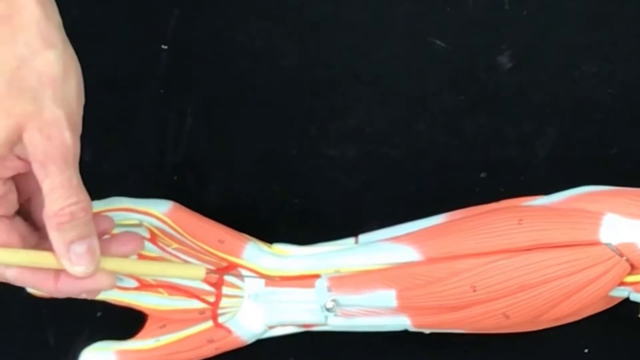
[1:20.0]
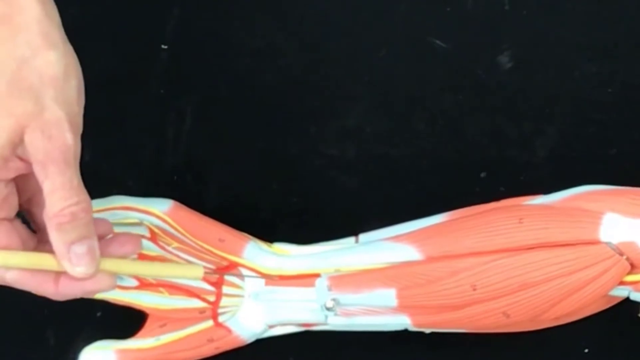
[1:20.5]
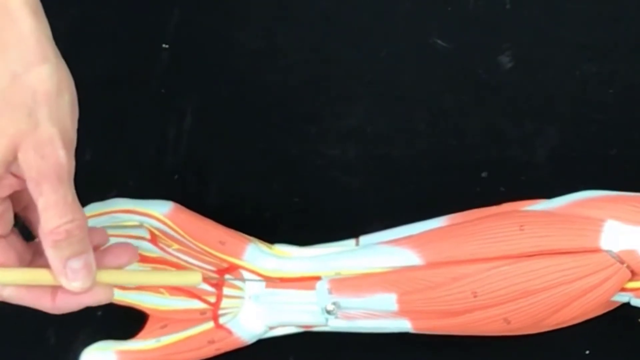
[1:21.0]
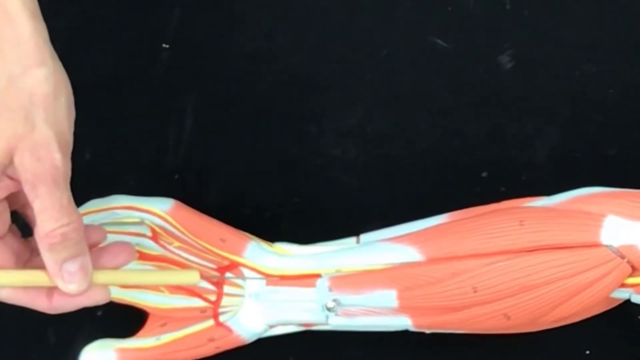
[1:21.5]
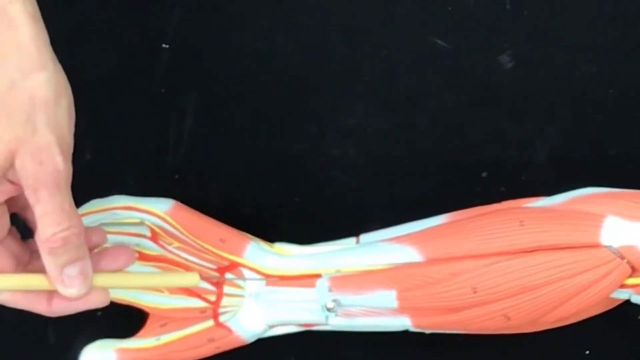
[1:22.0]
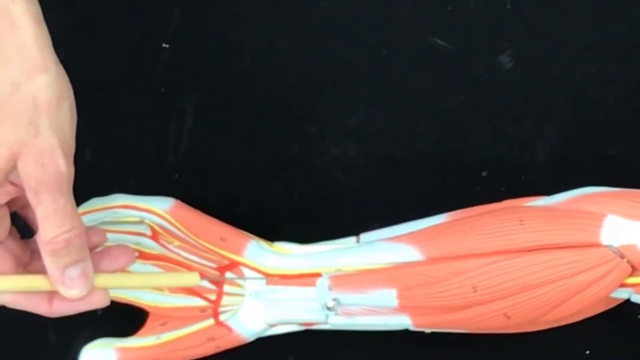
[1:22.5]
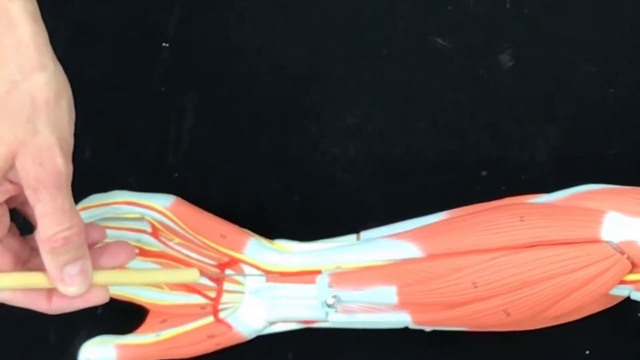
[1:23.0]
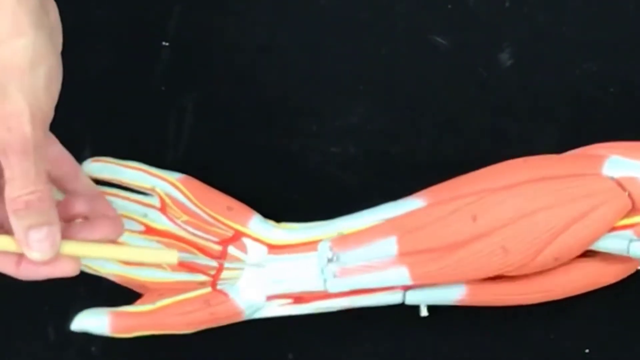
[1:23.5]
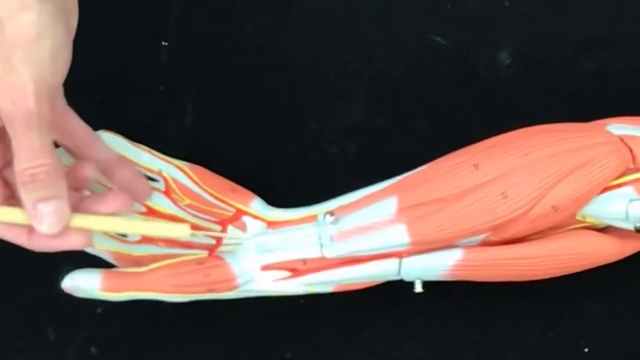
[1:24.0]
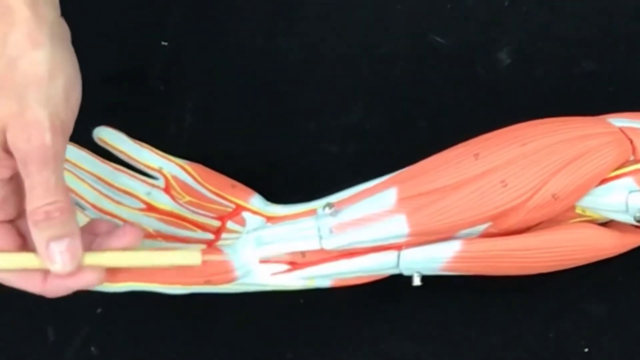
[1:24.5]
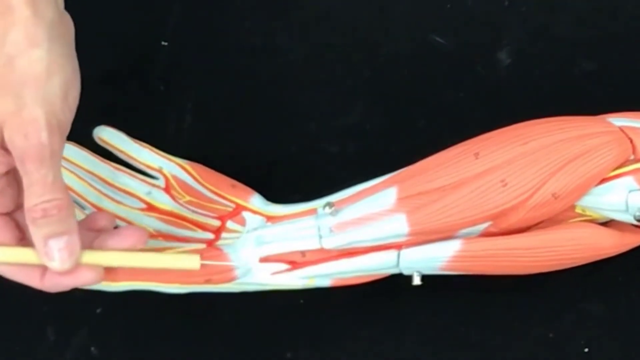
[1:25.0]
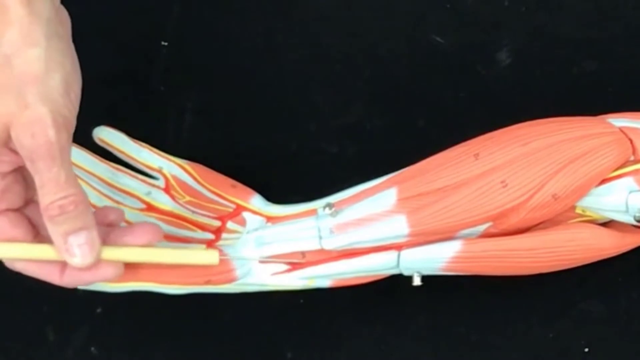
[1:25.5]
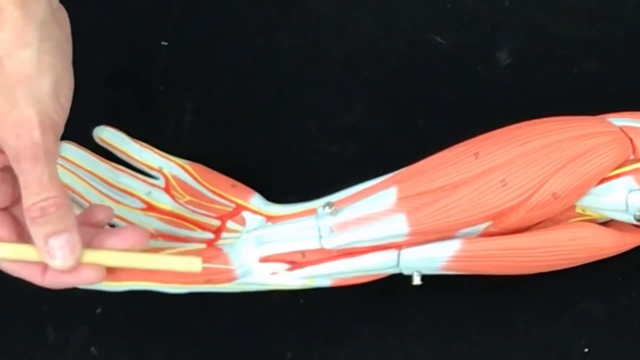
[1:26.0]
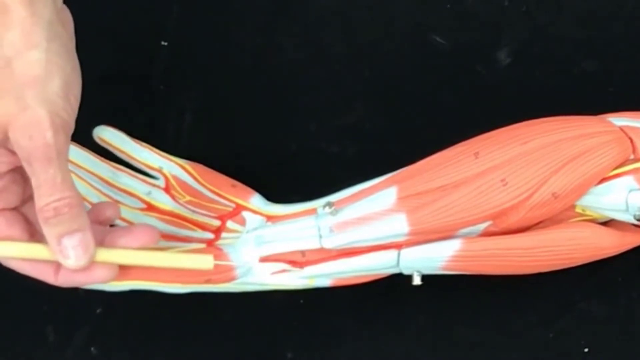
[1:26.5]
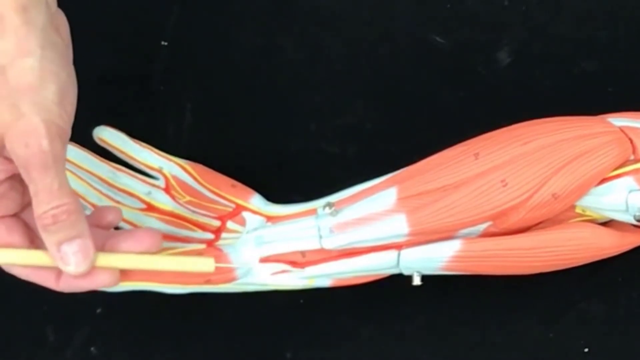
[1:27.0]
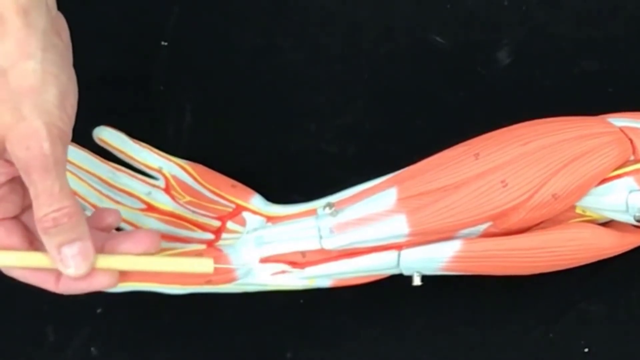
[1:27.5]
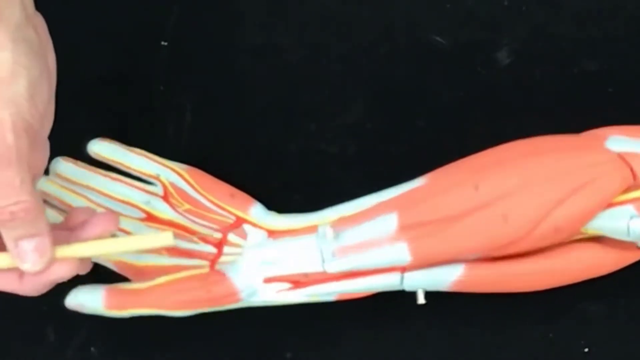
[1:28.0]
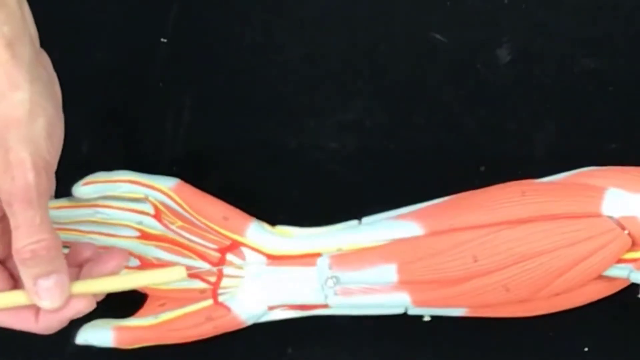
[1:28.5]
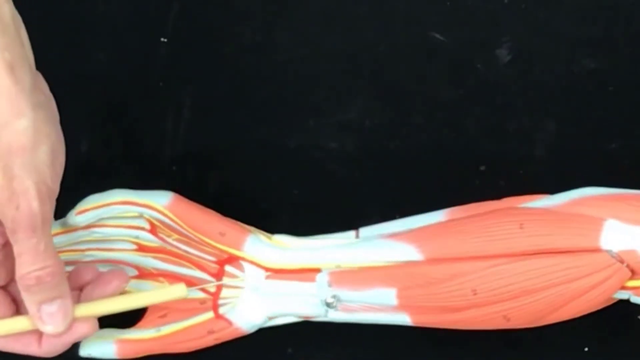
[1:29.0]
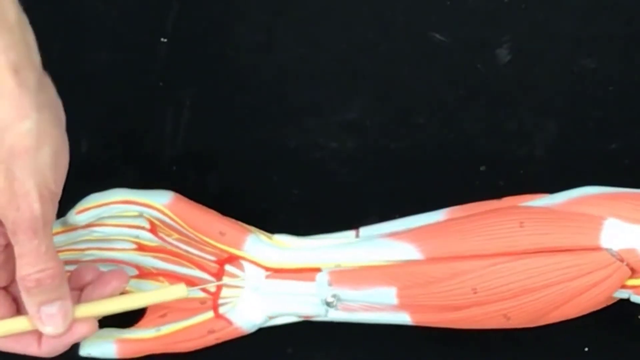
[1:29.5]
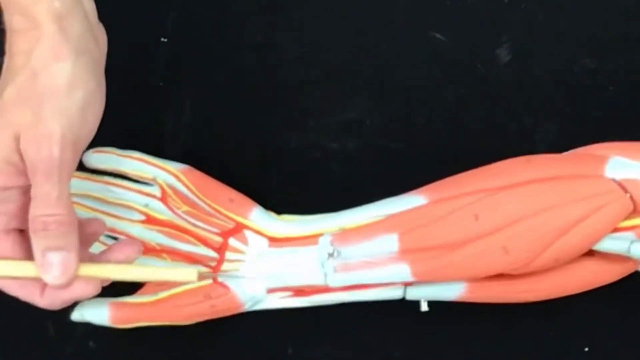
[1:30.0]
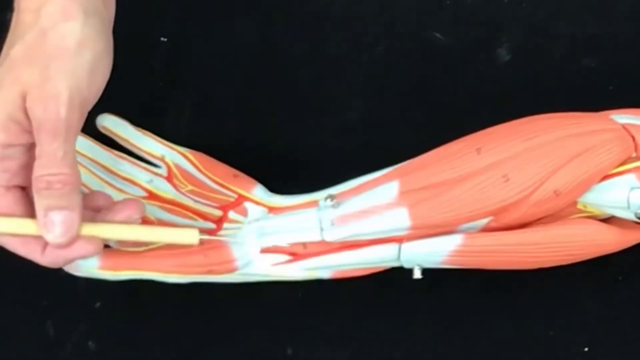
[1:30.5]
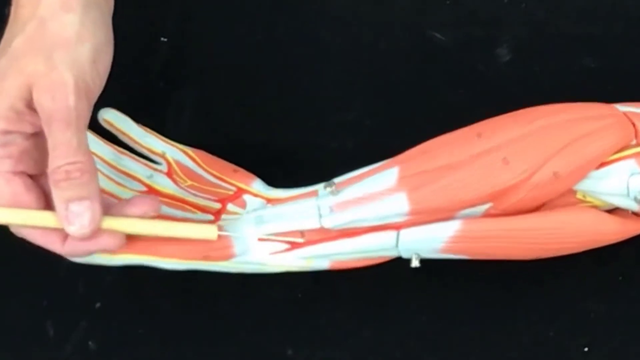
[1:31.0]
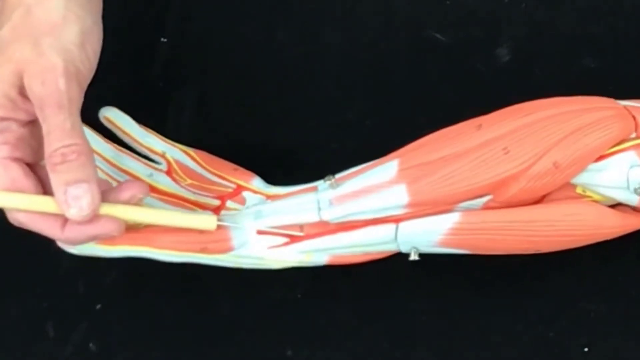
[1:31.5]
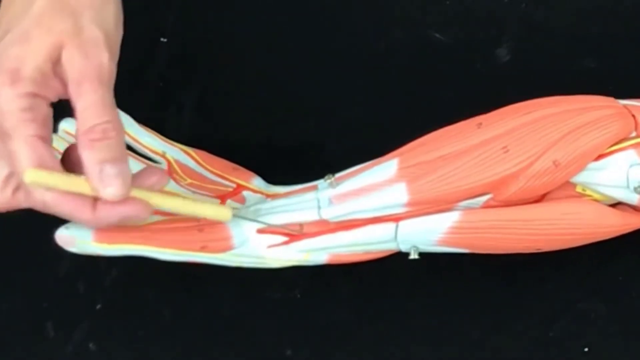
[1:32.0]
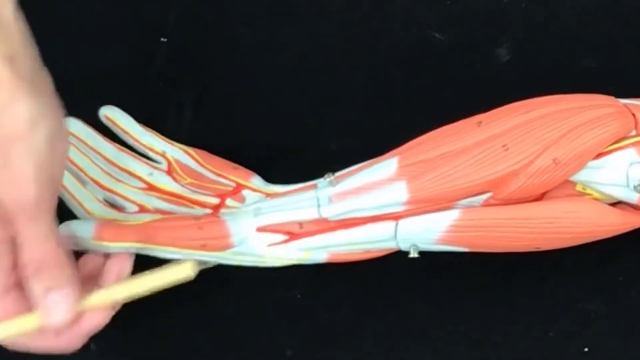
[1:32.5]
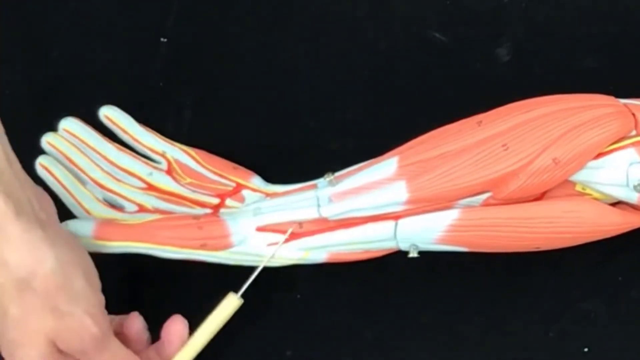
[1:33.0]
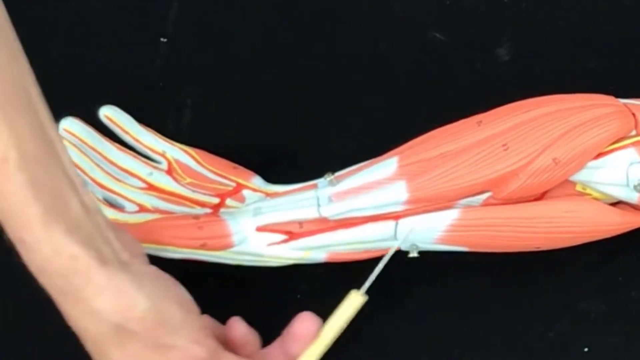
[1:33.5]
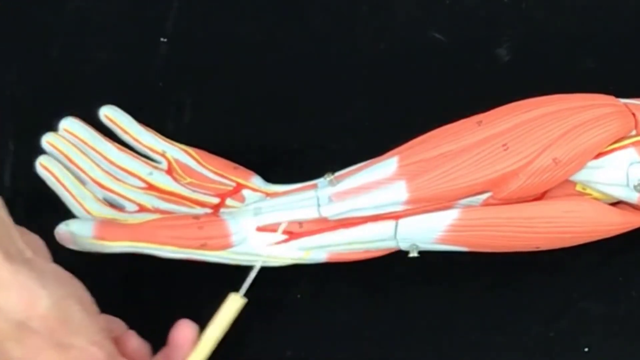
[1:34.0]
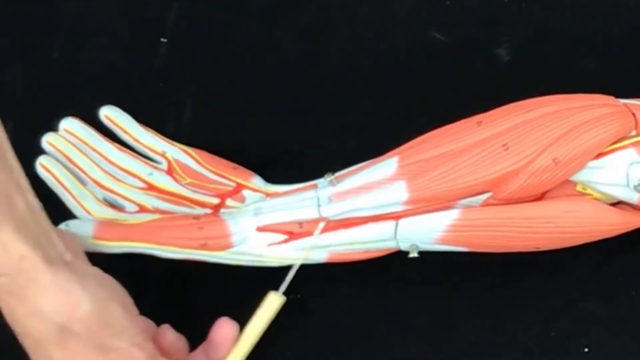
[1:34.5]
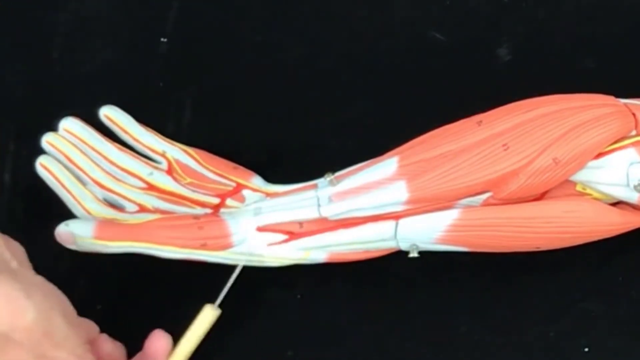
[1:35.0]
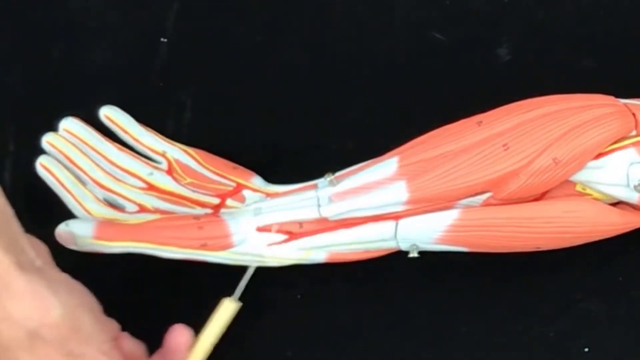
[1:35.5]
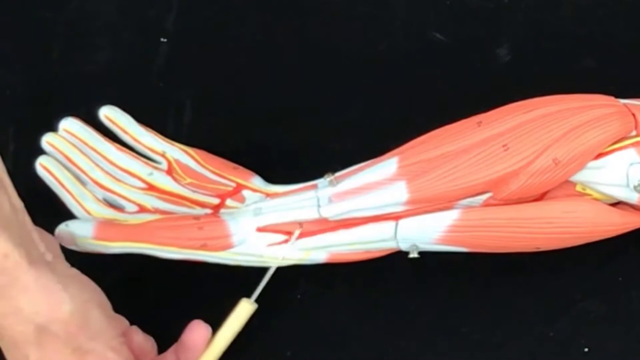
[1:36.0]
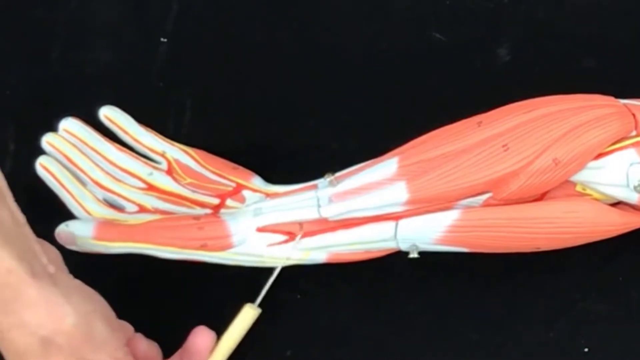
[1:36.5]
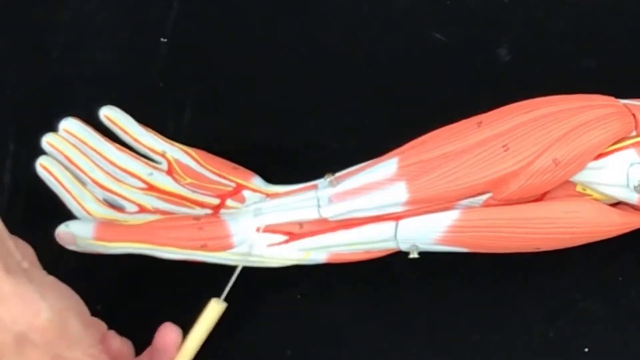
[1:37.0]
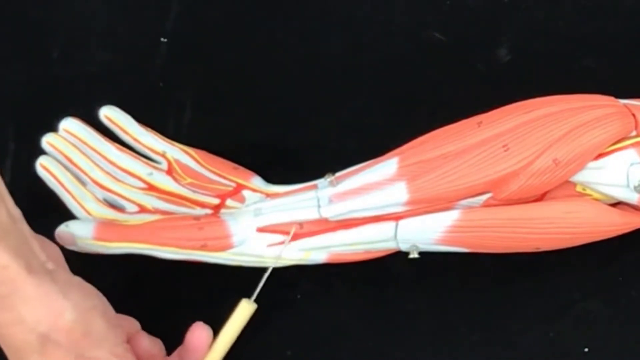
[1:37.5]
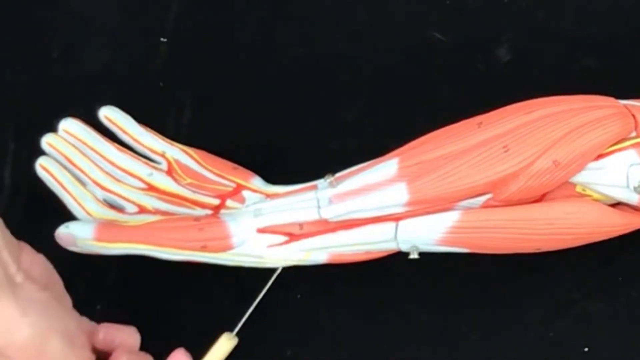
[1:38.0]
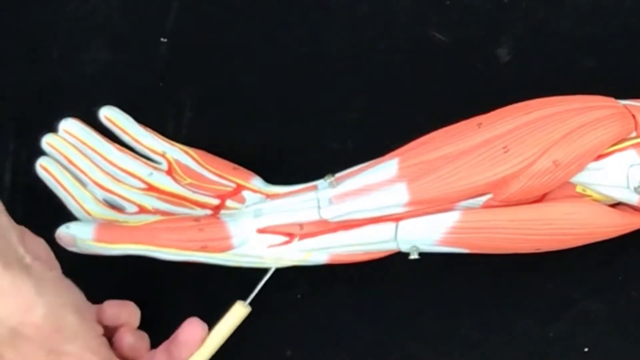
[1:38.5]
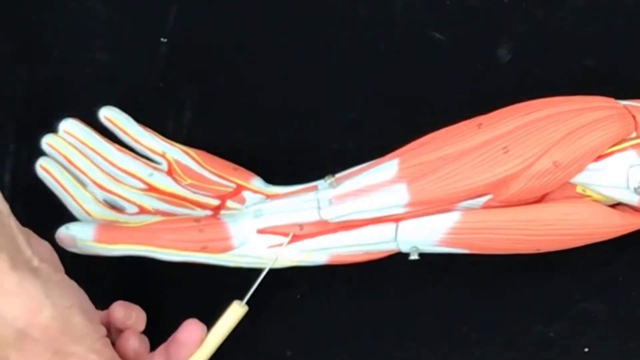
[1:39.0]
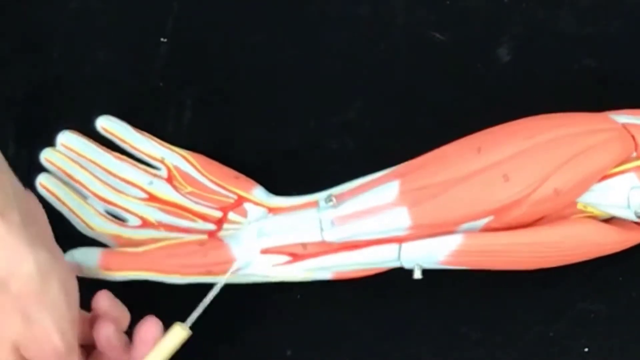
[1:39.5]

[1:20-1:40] The pointer is still on the center of the juncture of the wrist and hand; she then brings it back out under the thumb, almost to the inside of the arm. She alternates between the inside of the wrist juncture and the inside of the arm under the thumb, moving the pointer back and forth about three to four inches, perhaps showing the flow of blood through that artery where it passes out of sight between the top and bottom muscle masses of the lower arm. She appears to be emphasizing how the blood flows through the artery and takes a sharp turn just below the base of the hand, on the thumb side, to end up in the center of the arm at the juncture of the wrist and hand.